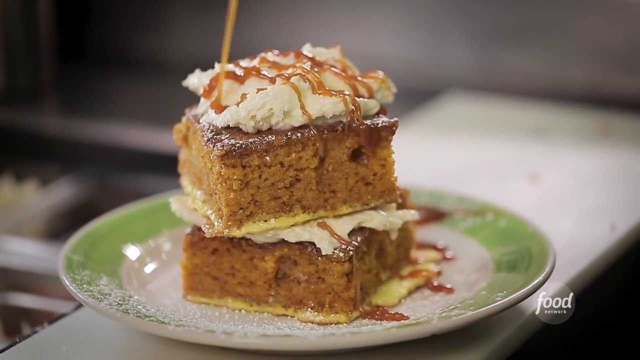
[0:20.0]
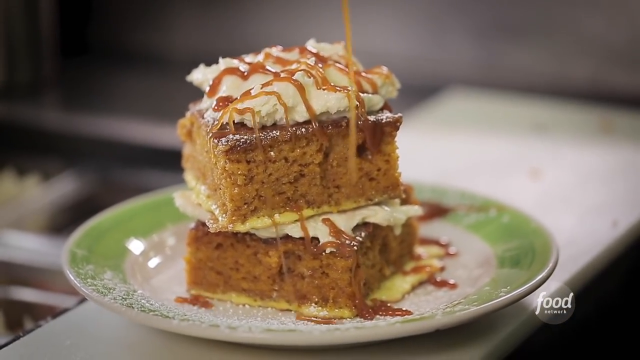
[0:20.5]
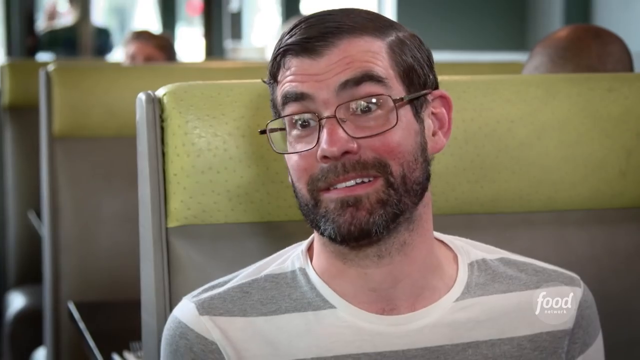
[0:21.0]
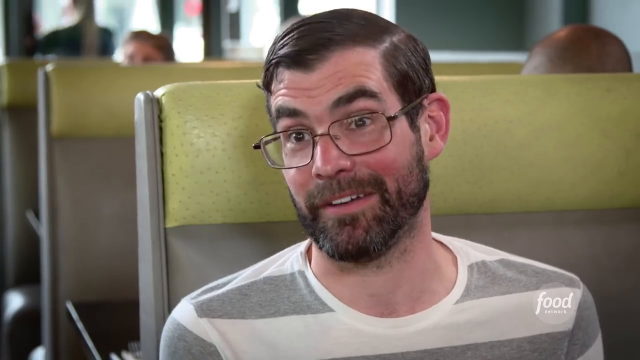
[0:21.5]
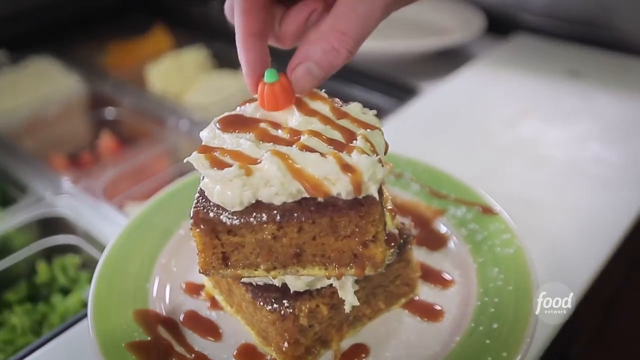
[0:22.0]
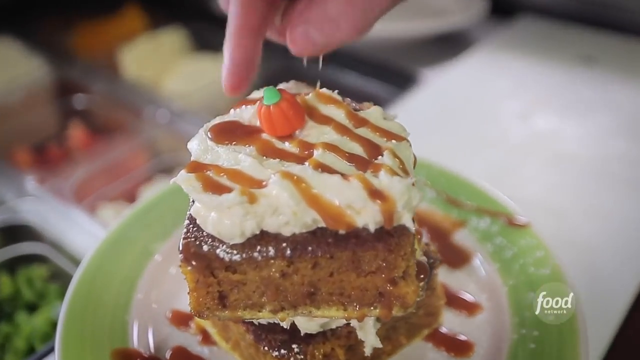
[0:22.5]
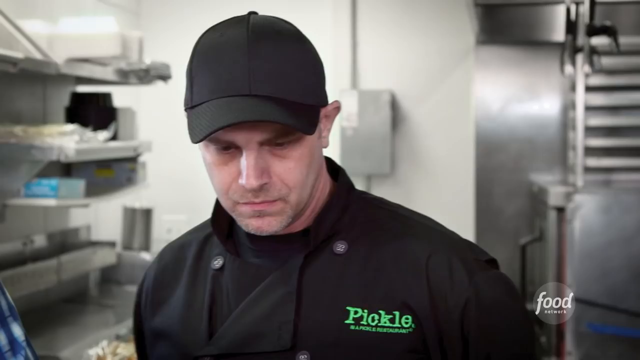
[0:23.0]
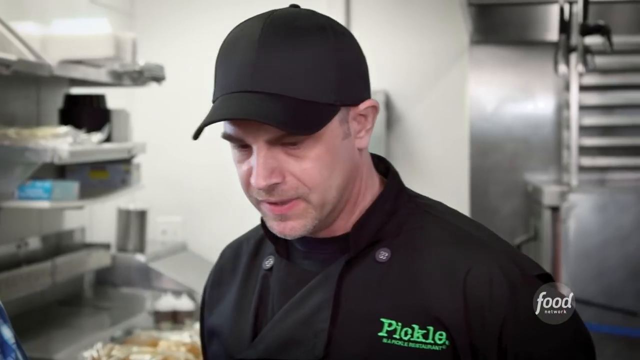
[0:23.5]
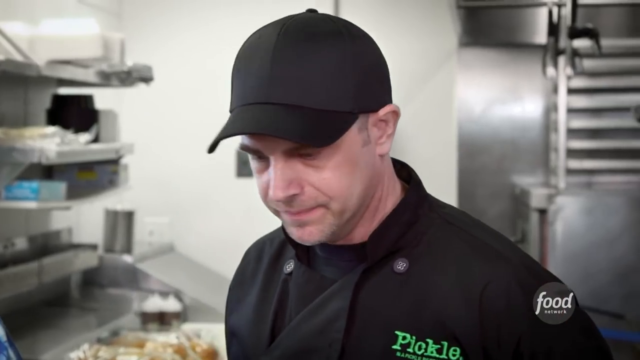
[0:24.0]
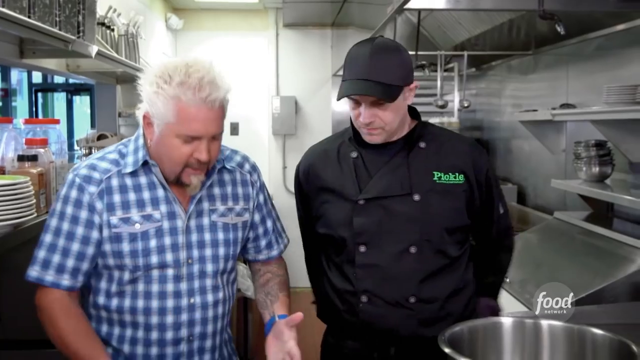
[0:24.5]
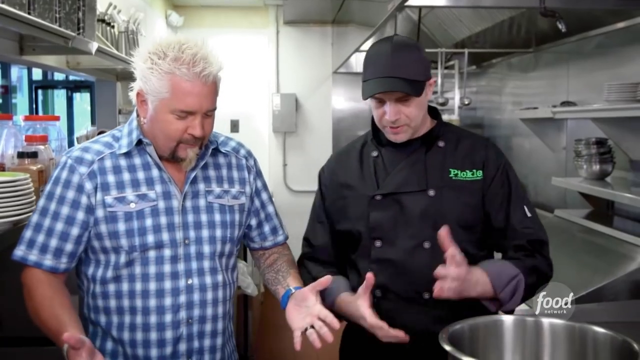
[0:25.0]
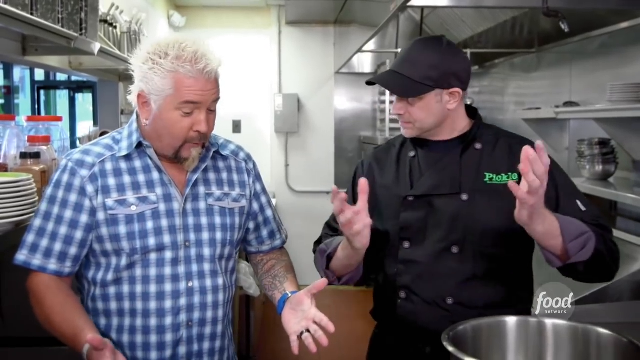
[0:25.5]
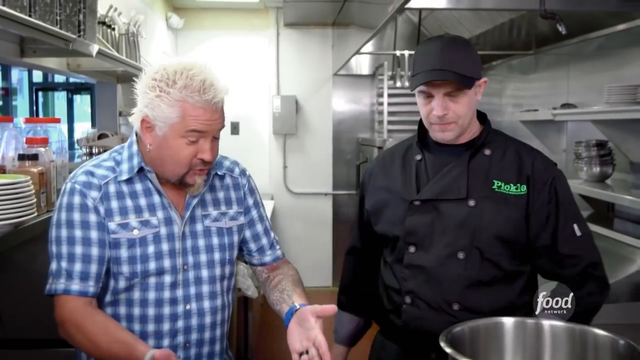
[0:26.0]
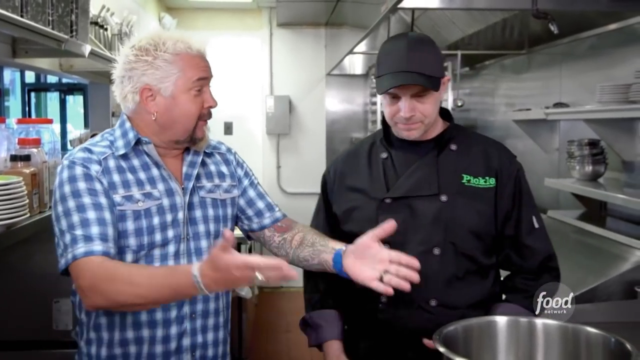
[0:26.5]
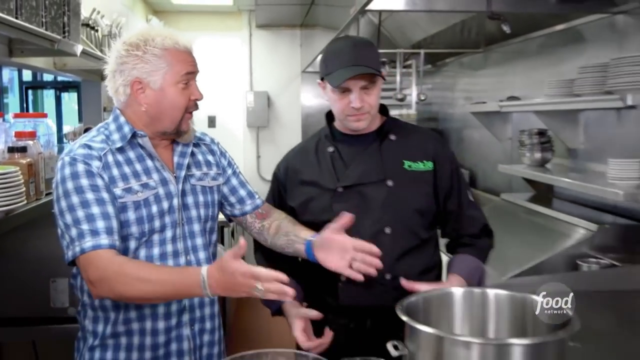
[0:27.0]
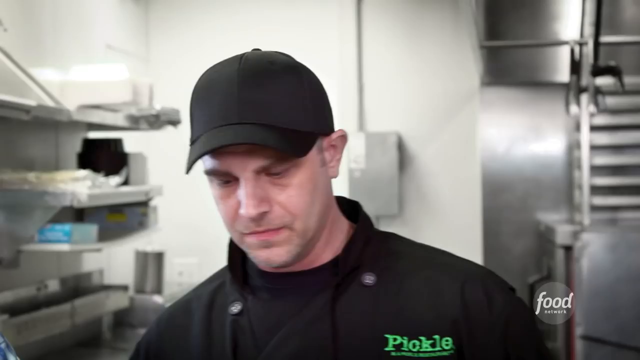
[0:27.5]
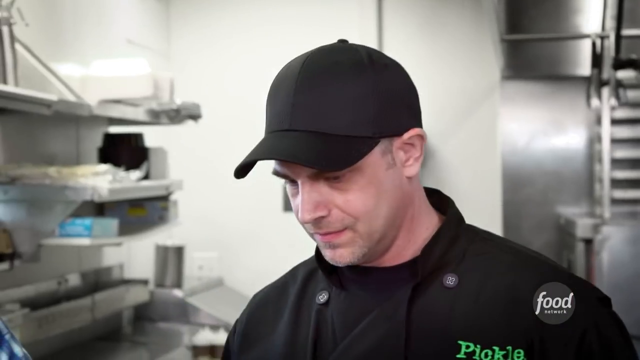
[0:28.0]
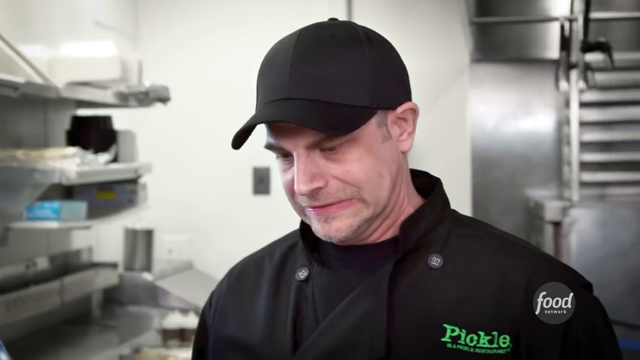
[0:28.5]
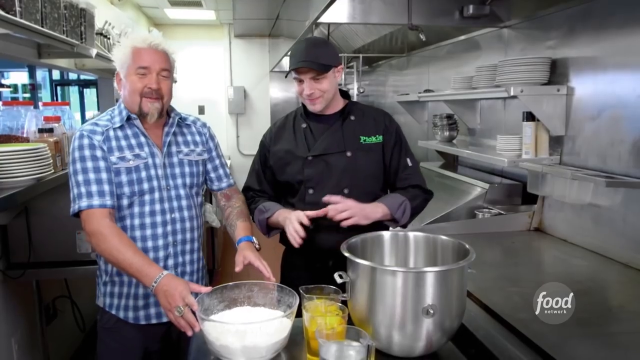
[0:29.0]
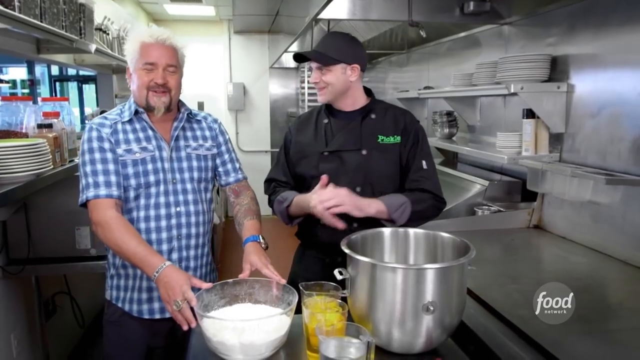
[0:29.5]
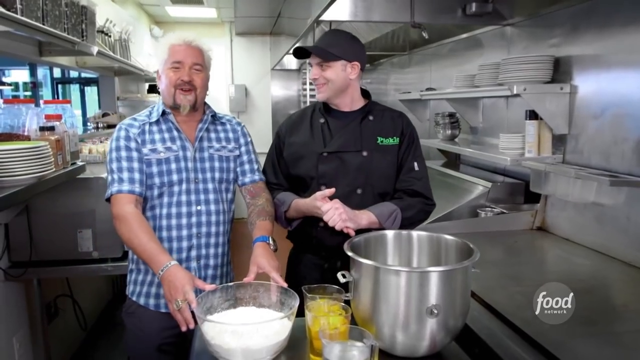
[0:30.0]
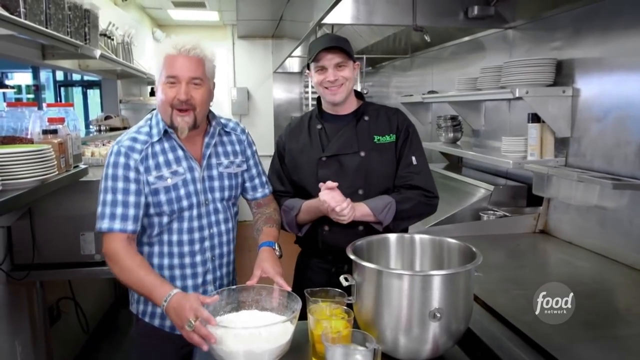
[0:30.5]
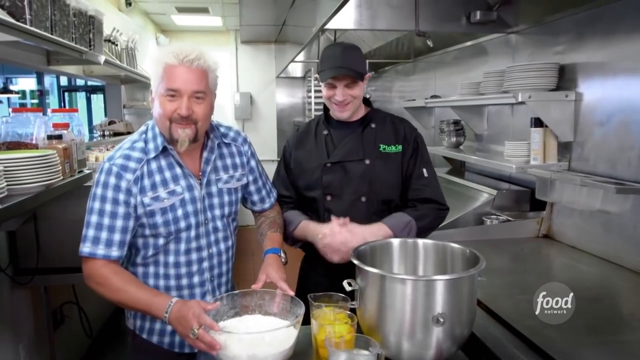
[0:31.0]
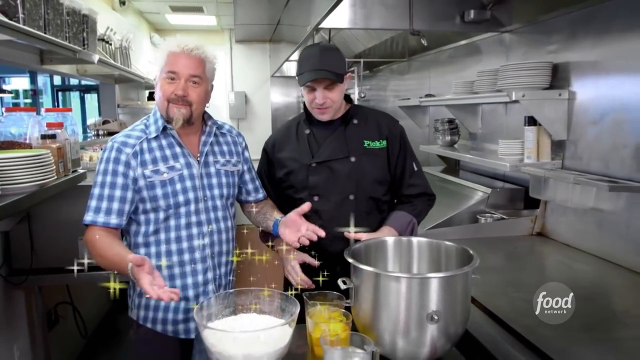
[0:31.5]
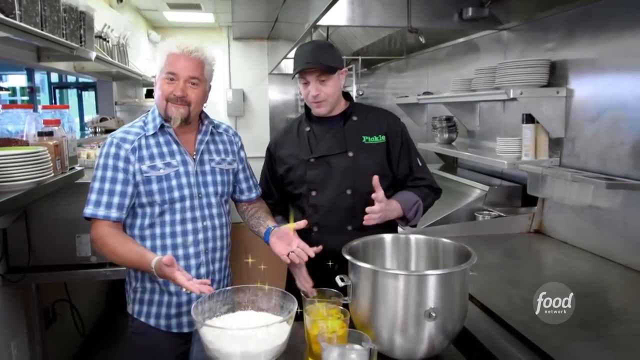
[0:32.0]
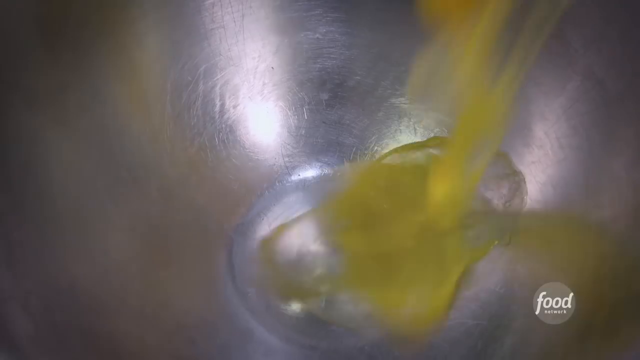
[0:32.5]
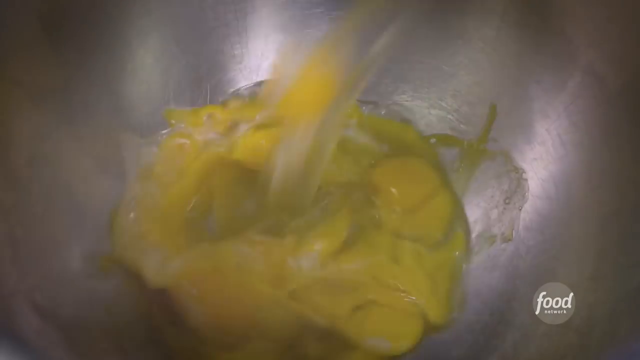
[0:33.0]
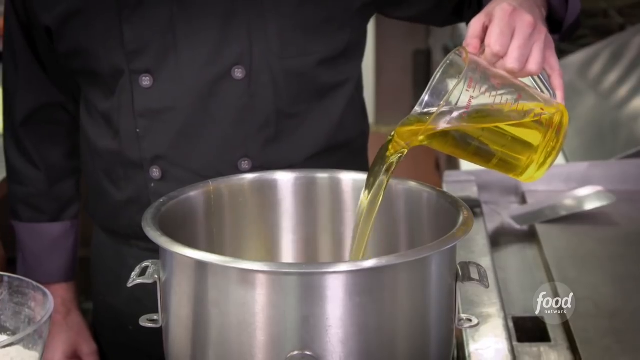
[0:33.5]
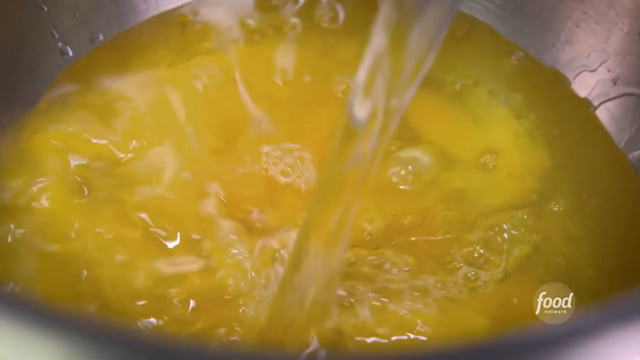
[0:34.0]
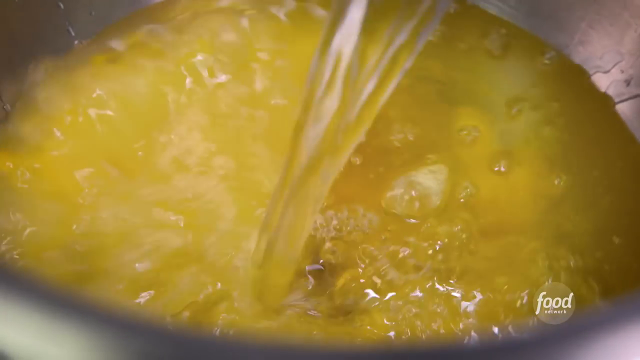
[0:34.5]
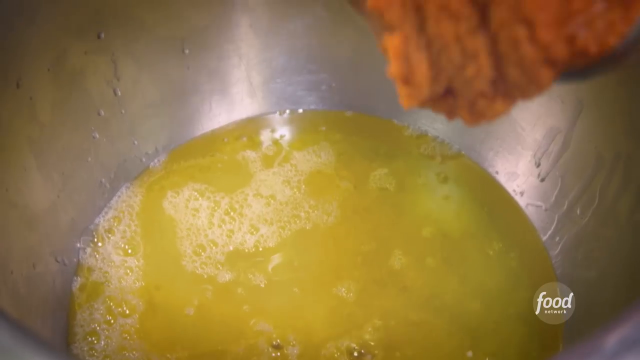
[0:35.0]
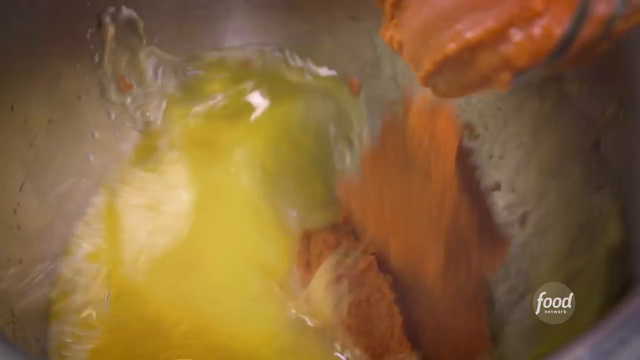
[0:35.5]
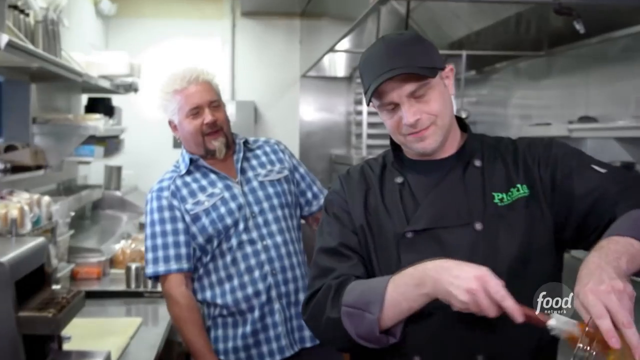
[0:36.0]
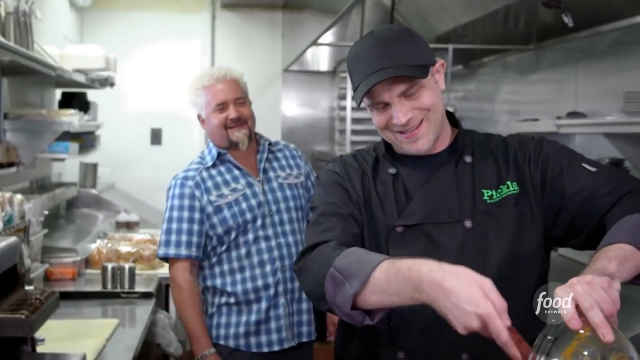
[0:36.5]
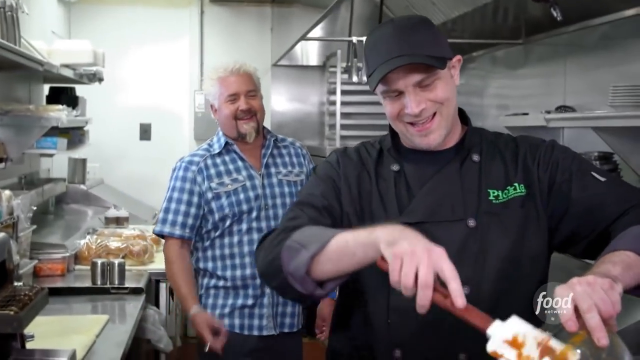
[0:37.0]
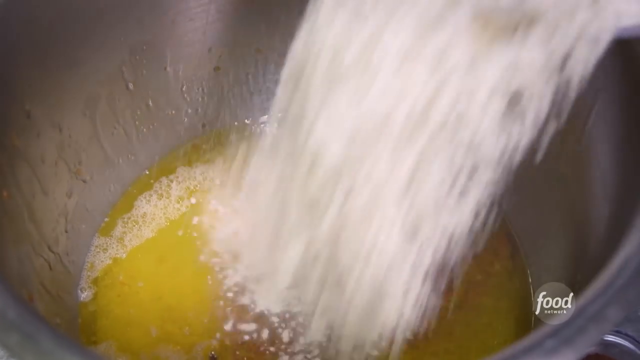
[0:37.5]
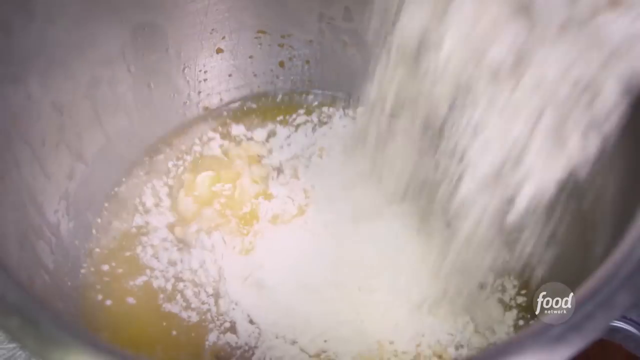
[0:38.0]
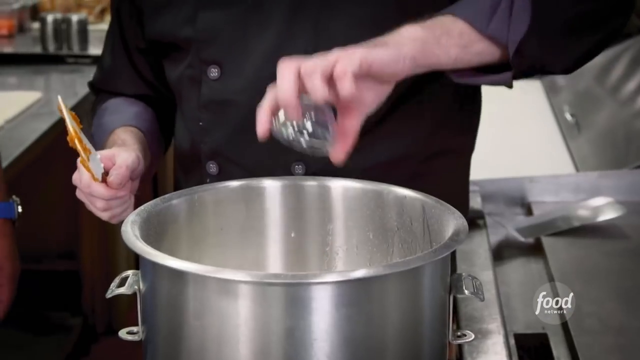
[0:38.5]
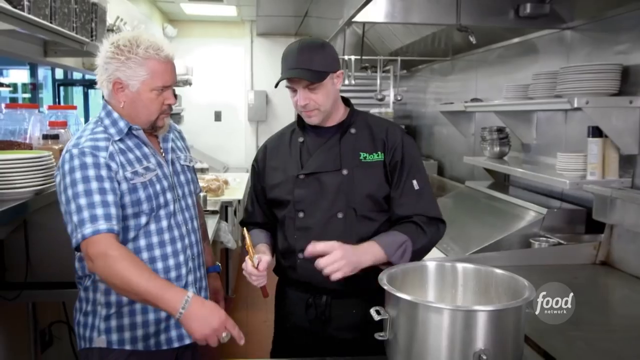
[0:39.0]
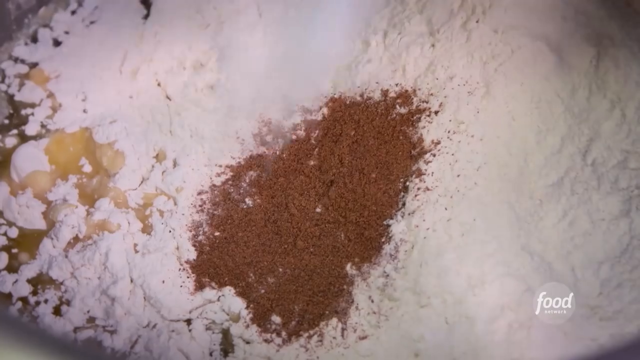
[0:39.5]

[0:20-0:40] Customers rave about the food at the restaurant called Pickle. In the kitchen, eggs are mixed with some type of mixture and flour, plus something that could possibly be brown sugar; the ingredients look somewhat like cake ingredients.